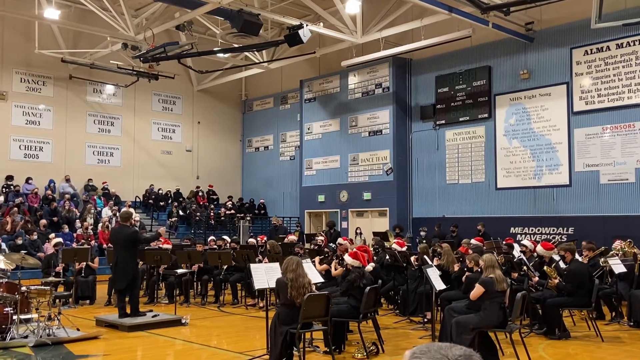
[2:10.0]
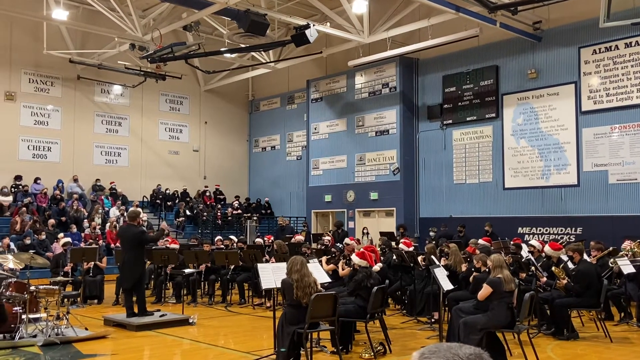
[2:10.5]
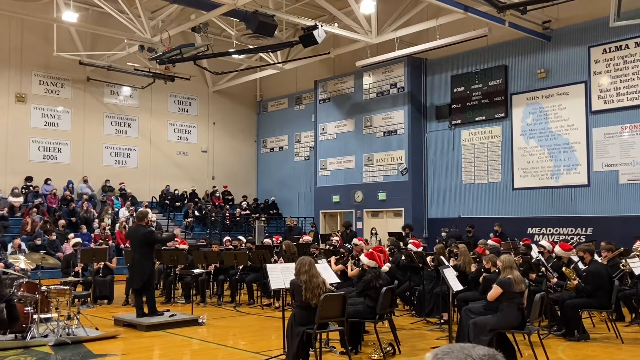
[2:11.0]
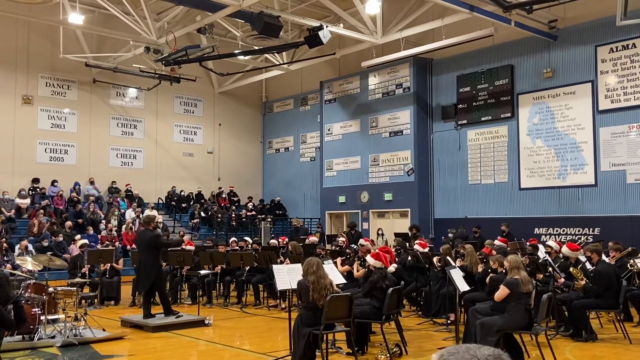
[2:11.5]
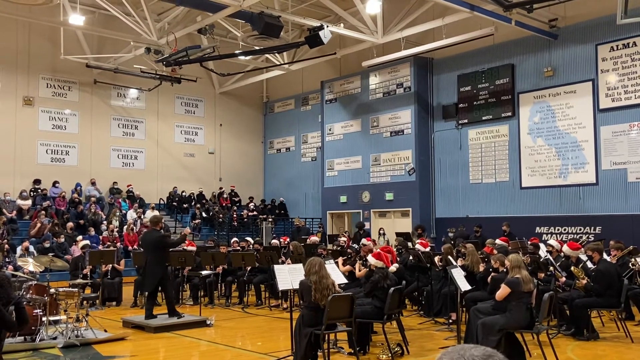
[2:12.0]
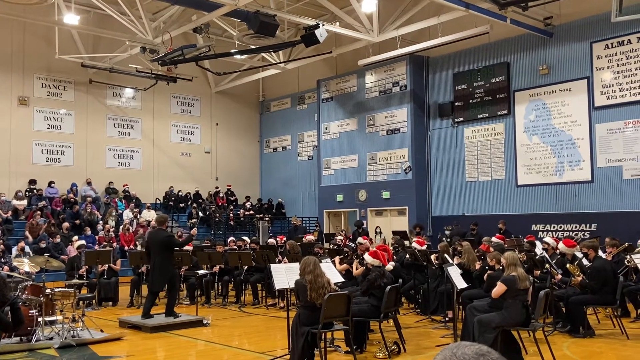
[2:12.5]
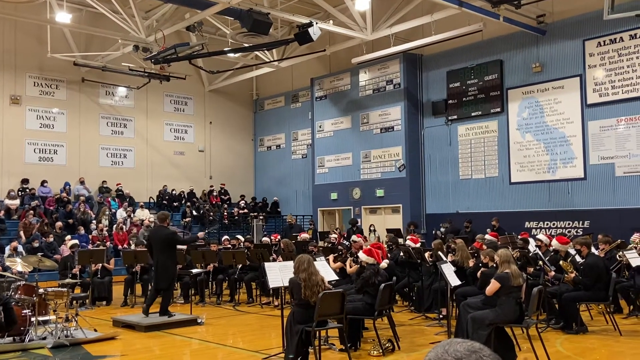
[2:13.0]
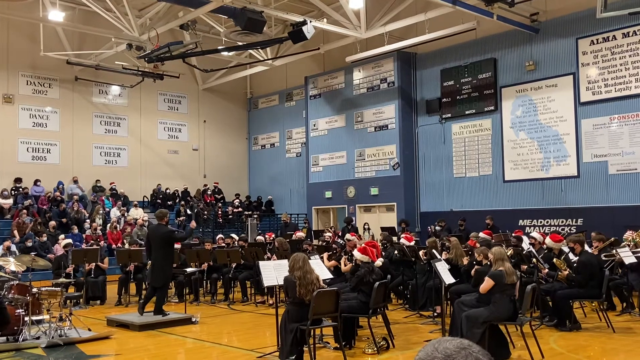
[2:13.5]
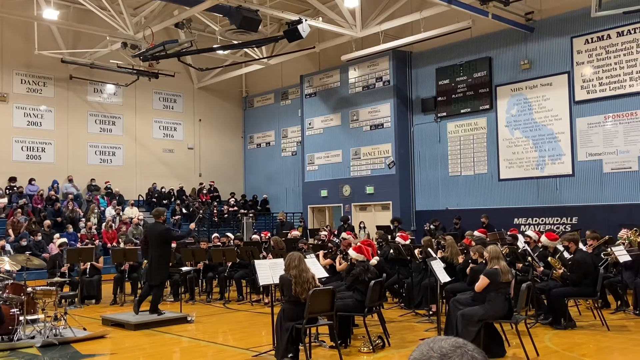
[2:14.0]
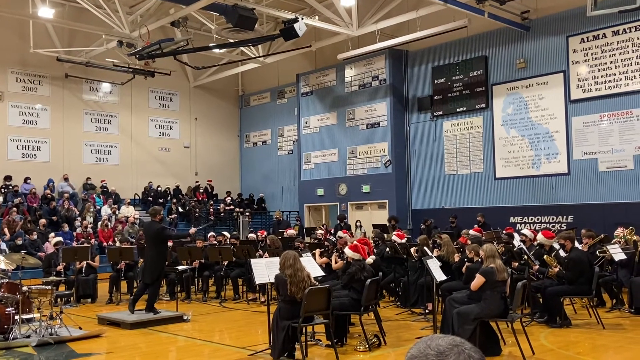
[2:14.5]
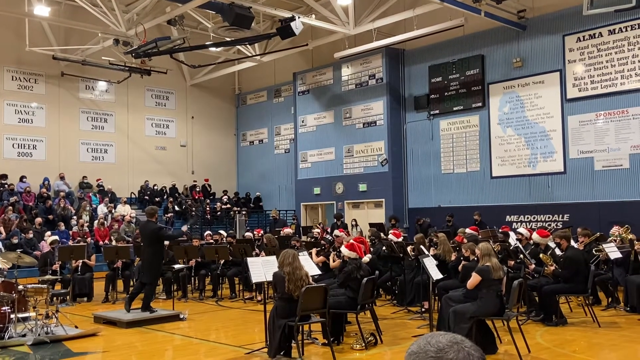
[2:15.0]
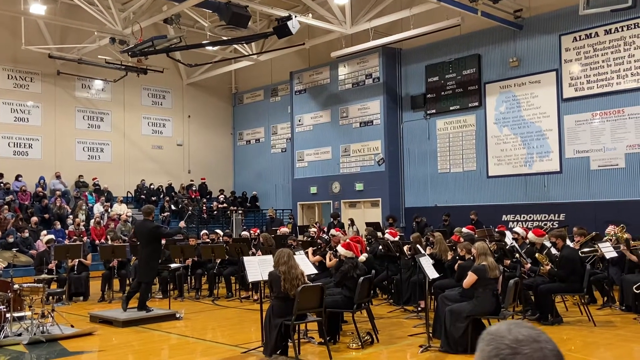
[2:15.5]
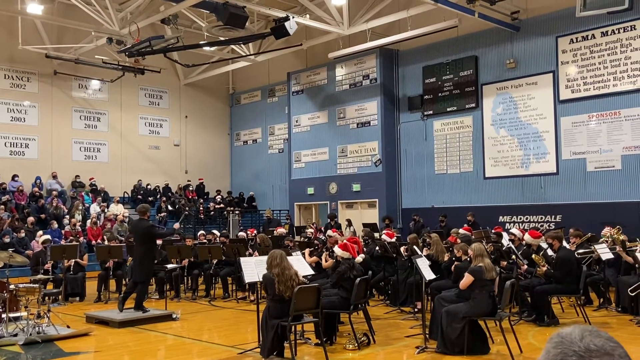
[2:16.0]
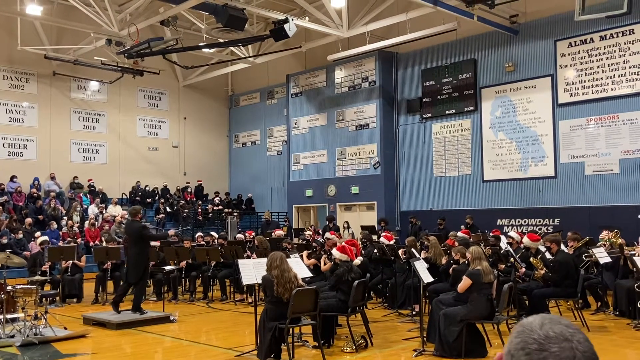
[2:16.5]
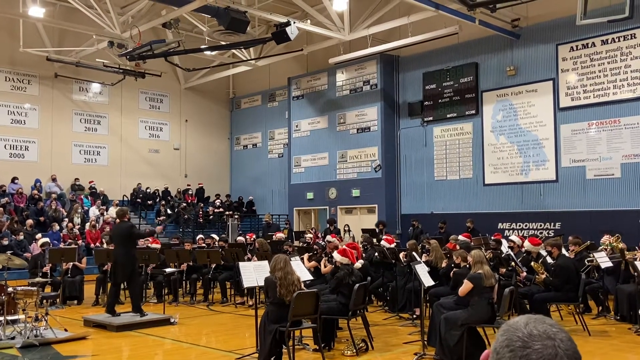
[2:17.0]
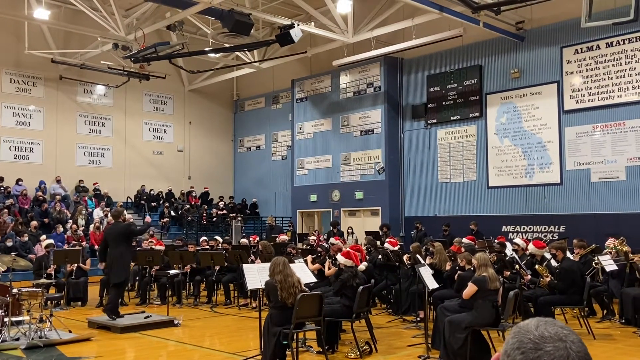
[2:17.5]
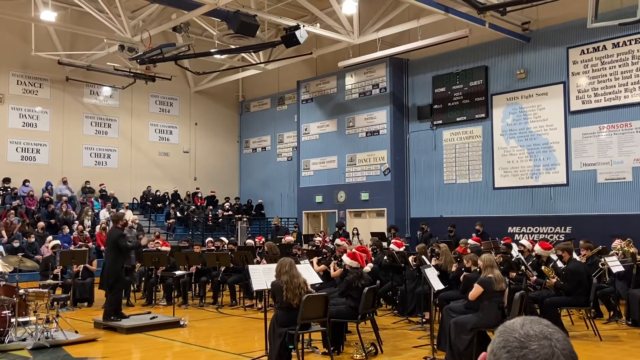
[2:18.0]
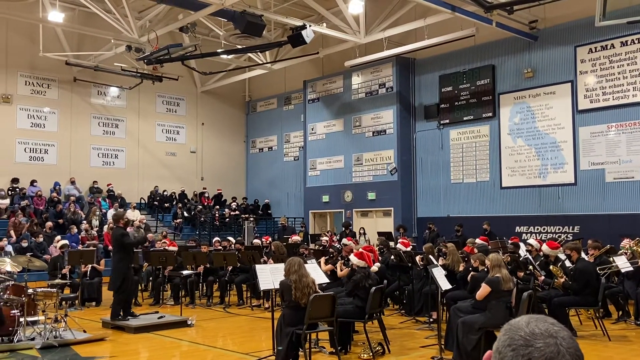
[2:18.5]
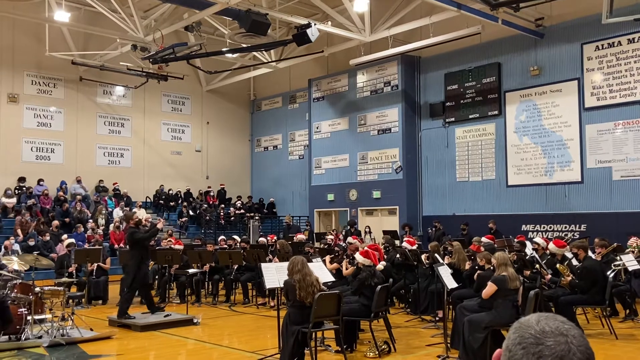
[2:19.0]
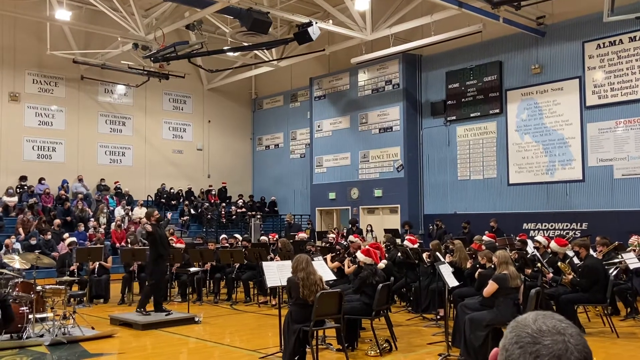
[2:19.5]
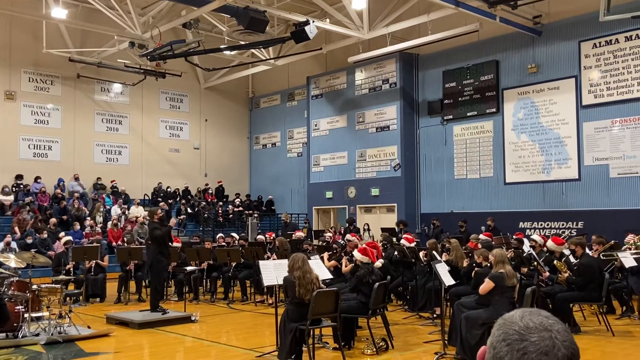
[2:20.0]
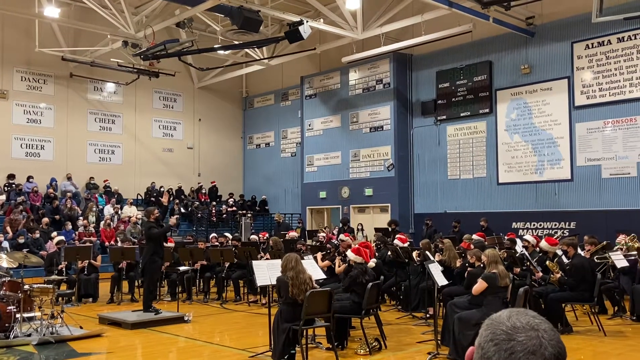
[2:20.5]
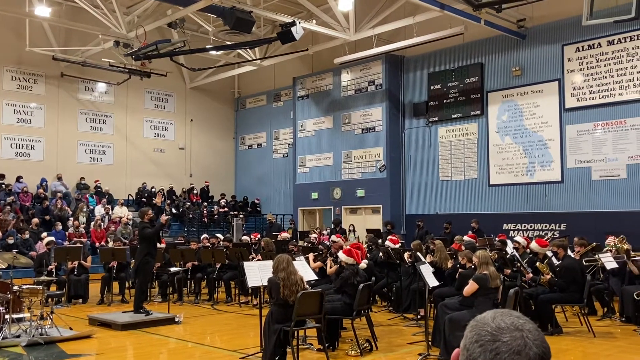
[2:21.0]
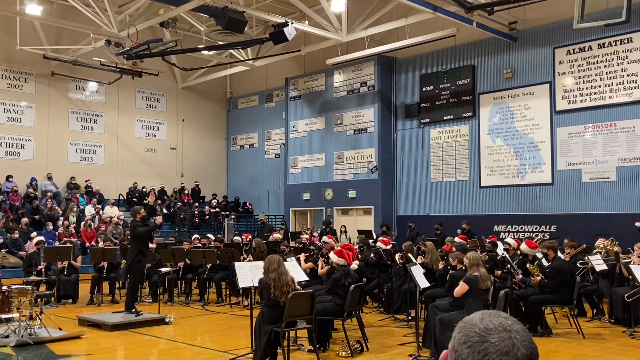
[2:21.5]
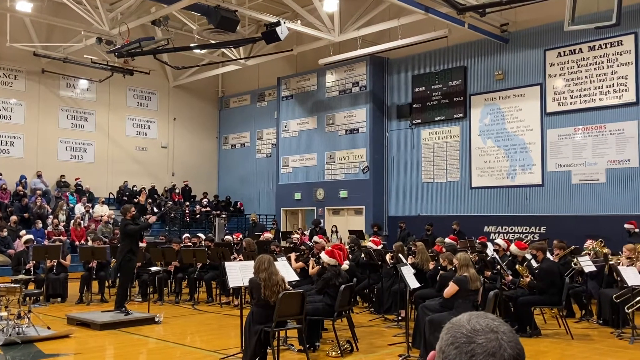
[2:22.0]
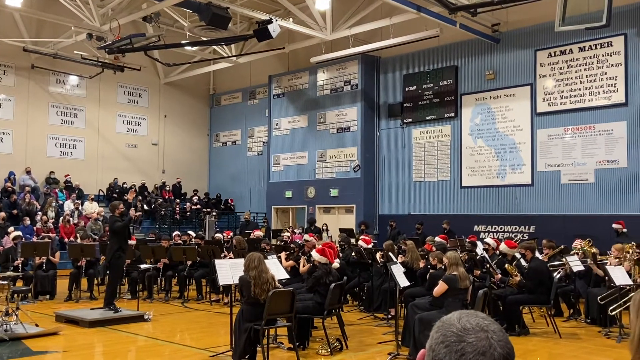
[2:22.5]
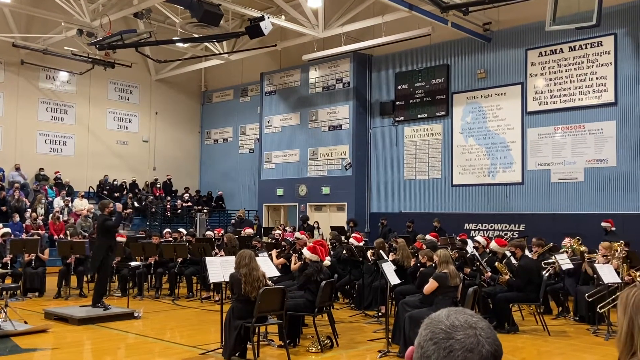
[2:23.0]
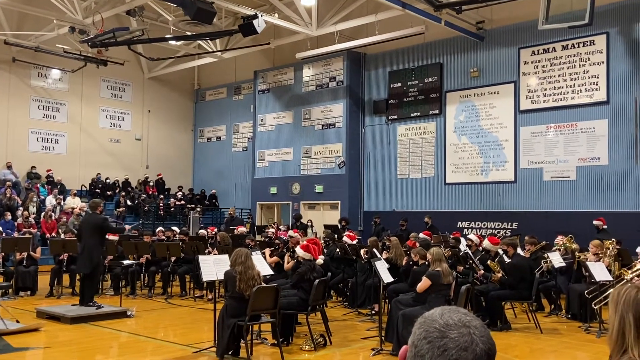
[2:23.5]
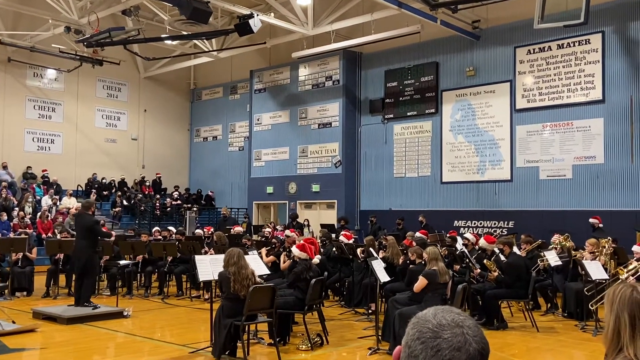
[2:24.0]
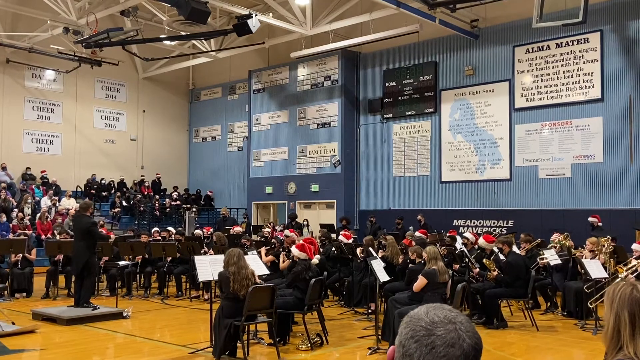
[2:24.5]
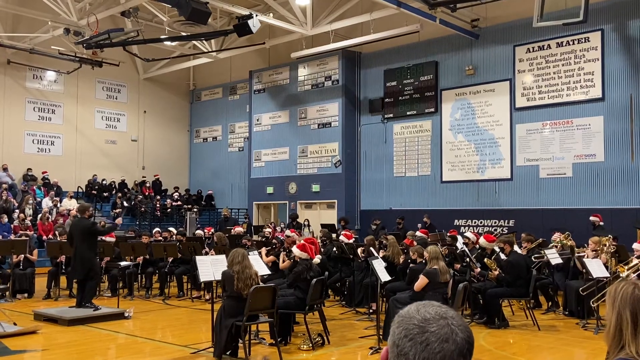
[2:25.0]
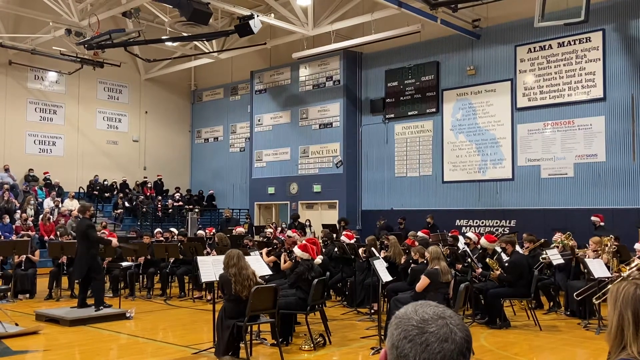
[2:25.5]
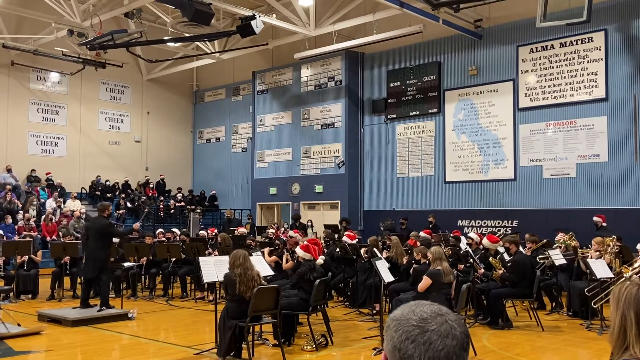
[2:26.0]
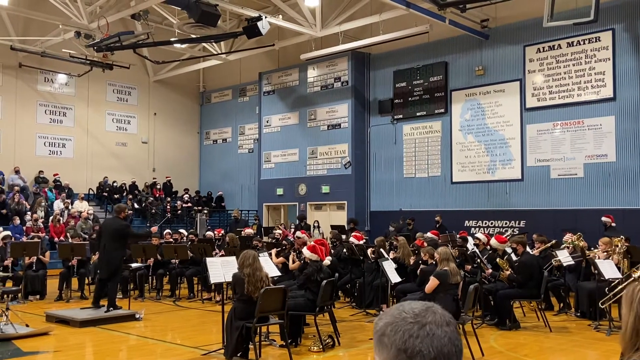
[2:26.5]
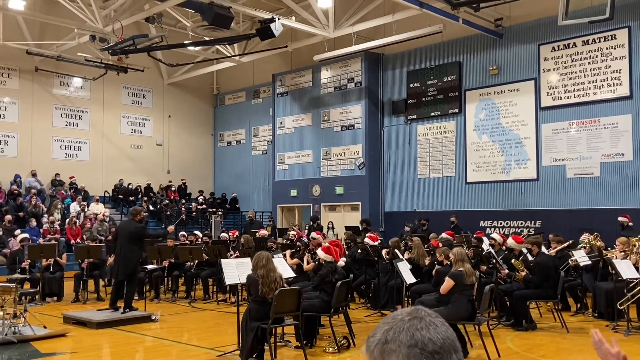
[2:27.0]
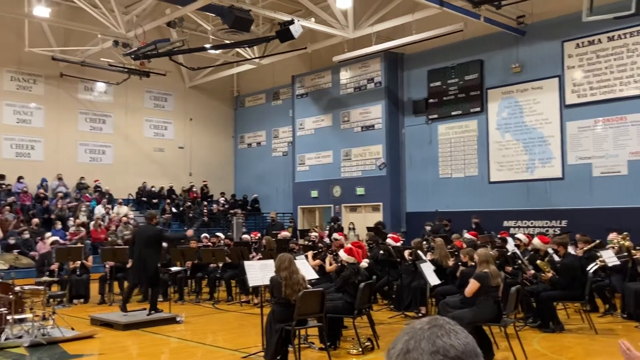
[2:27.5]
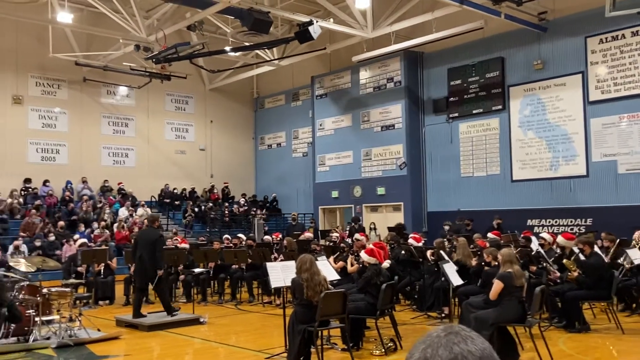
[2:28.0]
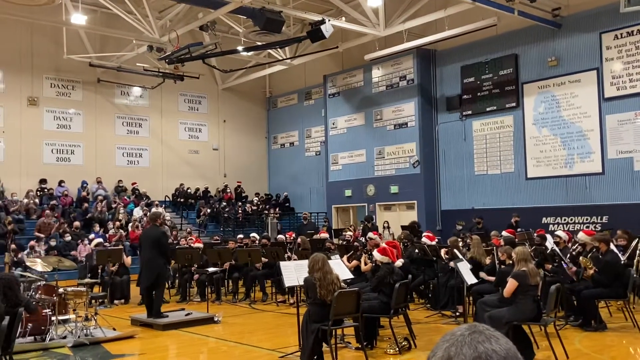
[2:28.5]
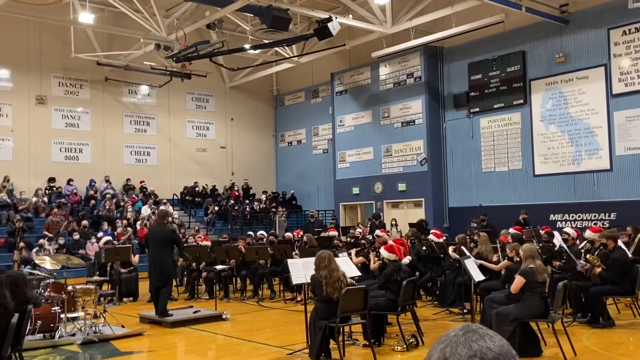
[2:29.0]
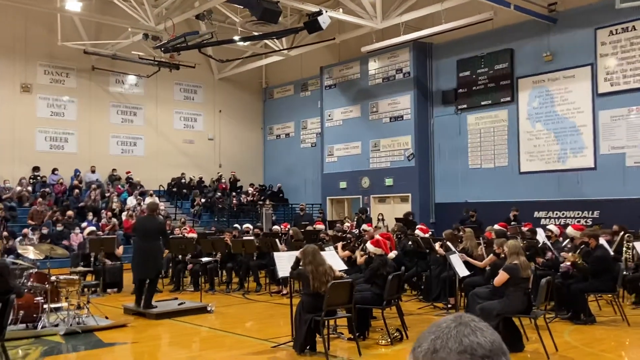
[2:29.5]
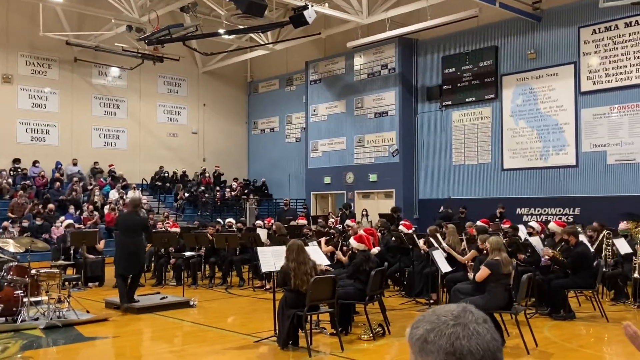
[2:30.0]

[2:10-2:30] The gym has a shiny wood floor with lines painted on it to make a basketball court. In the back left are bleachers with people sitting on them. In the center of the gym floor are black chairs with people sitting on them, all wearing black, some in Santa hats. In front of them, a man on a very small square stage, just a little bit off the ground, conducts the band with a stick in one hand. At the end he puts his hand up and then the stick up, apparently ending the song; the people in the bleachers clap, and everyone else stops playing their instruments. The basketball nets are put up at the top of the frame.